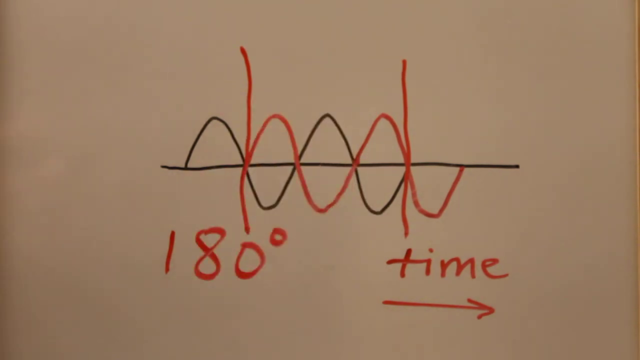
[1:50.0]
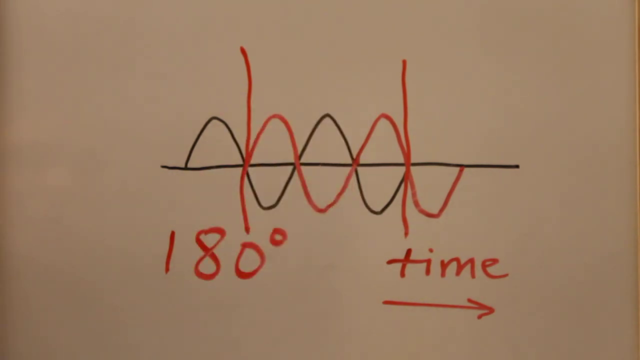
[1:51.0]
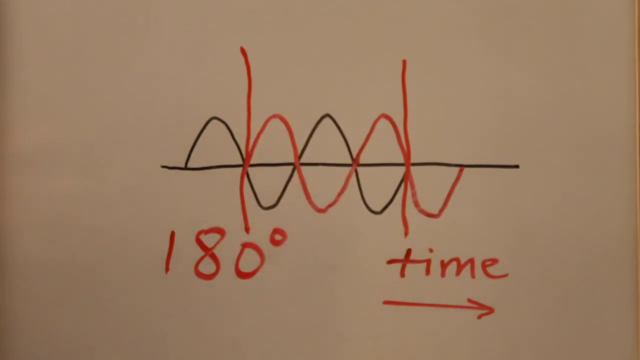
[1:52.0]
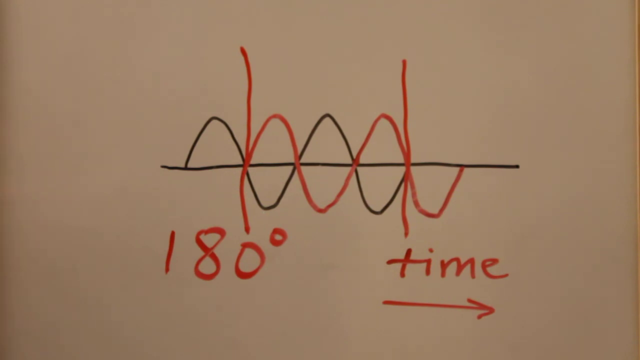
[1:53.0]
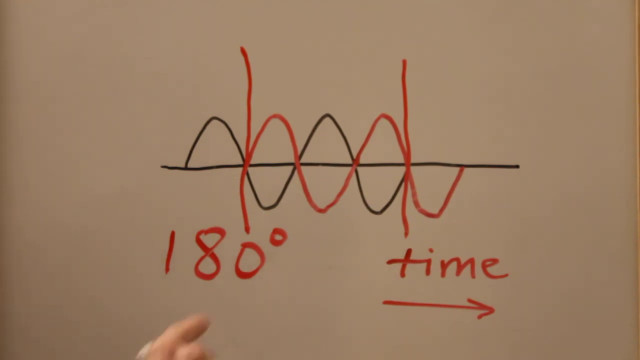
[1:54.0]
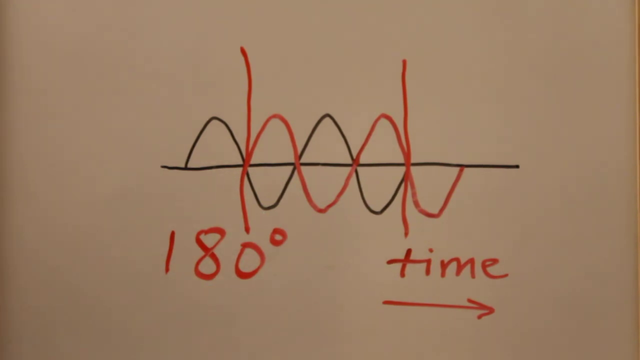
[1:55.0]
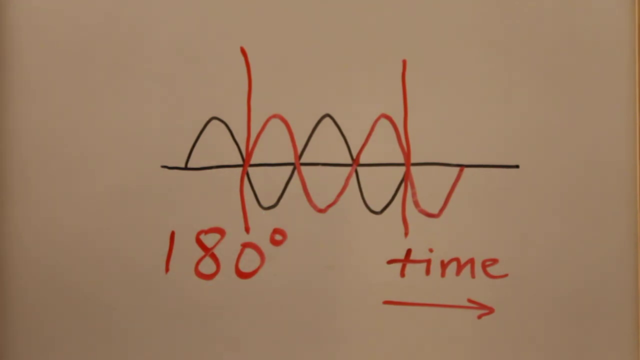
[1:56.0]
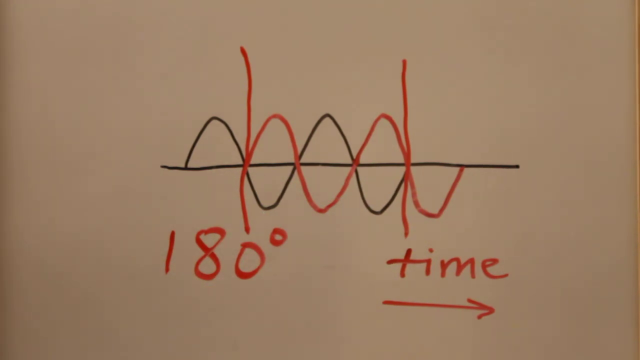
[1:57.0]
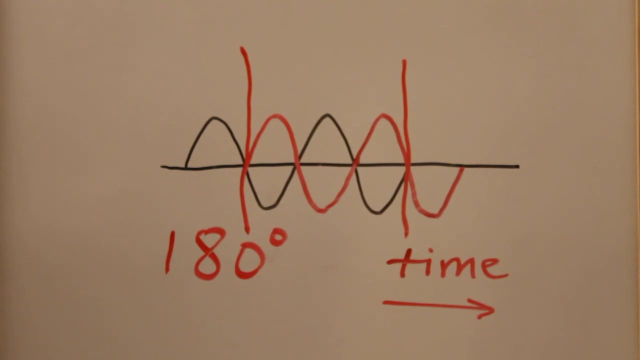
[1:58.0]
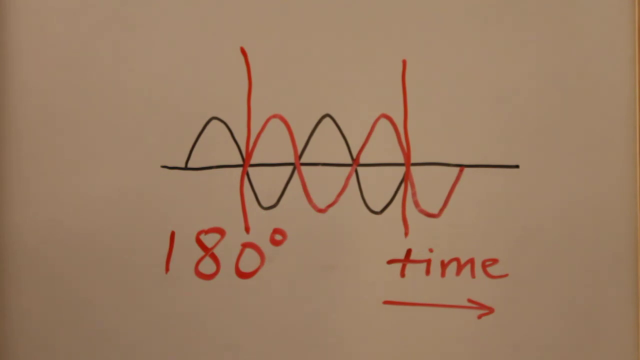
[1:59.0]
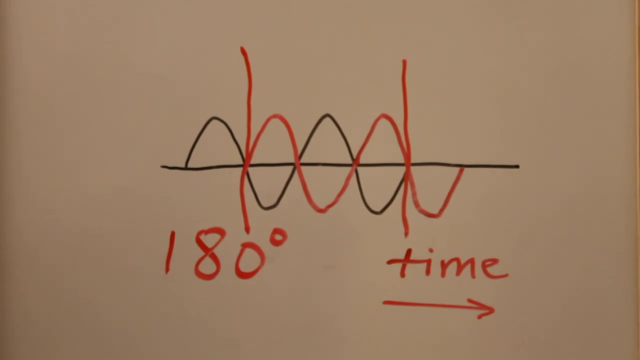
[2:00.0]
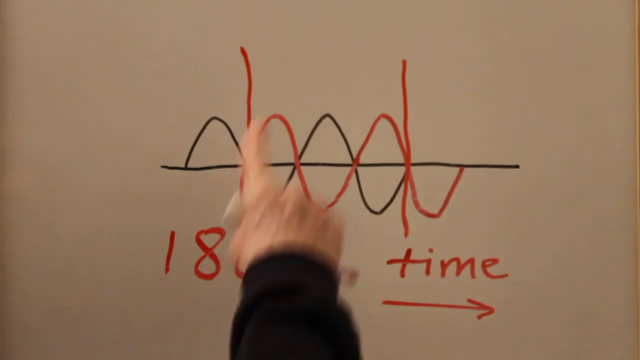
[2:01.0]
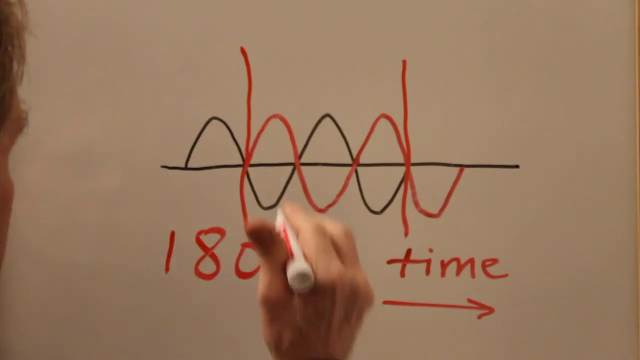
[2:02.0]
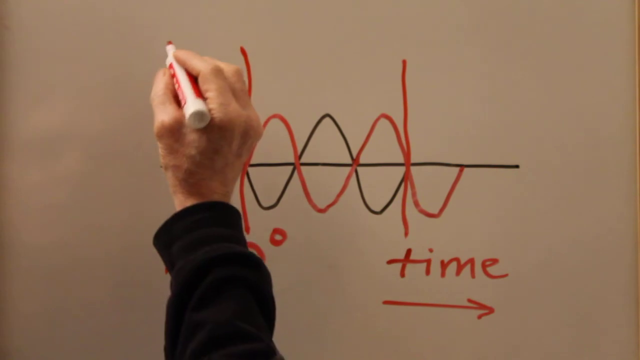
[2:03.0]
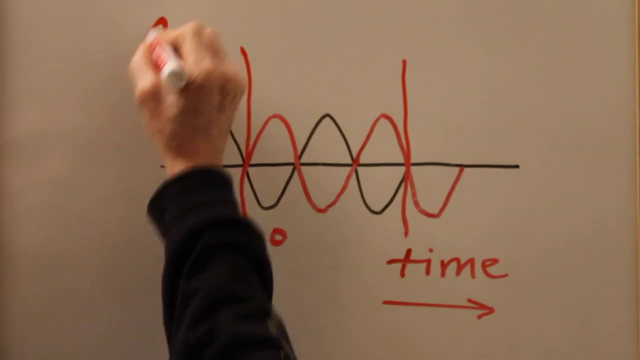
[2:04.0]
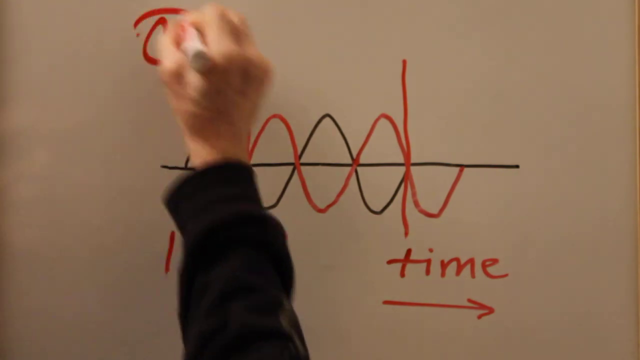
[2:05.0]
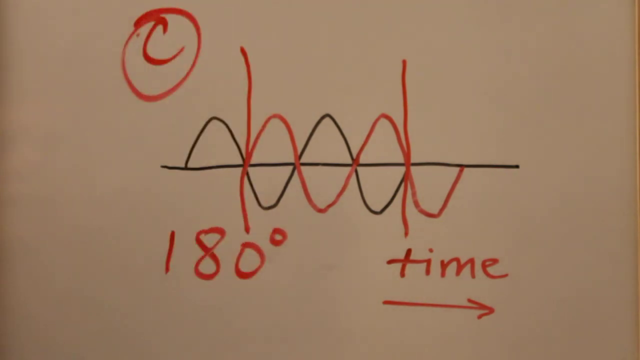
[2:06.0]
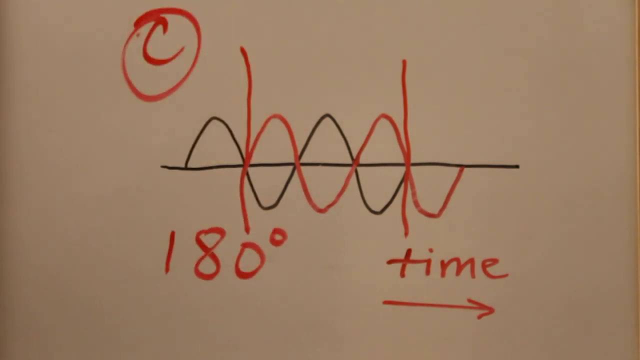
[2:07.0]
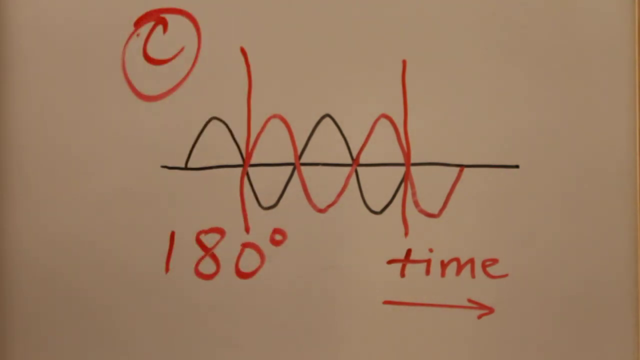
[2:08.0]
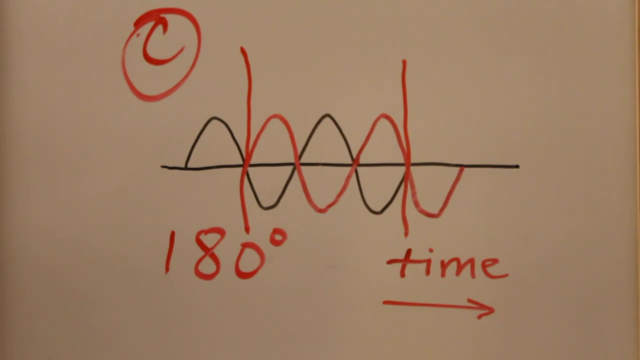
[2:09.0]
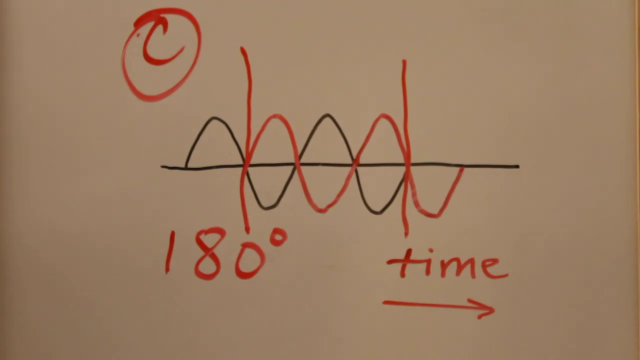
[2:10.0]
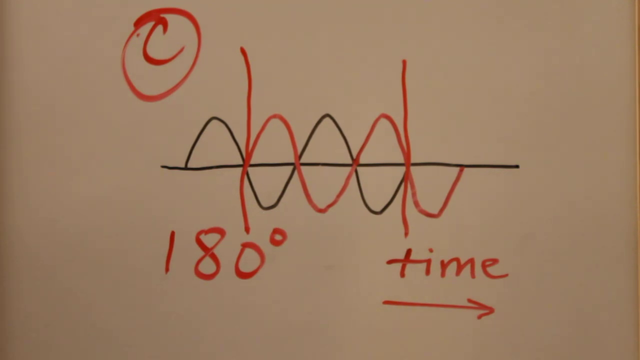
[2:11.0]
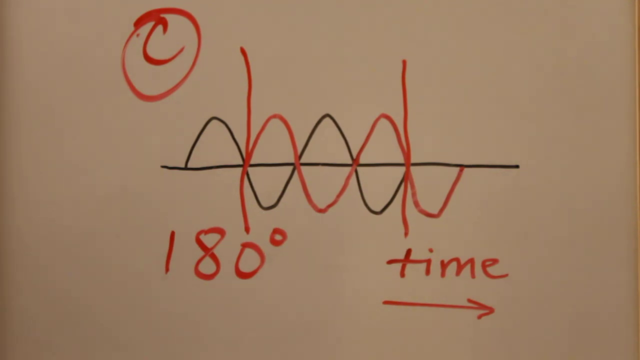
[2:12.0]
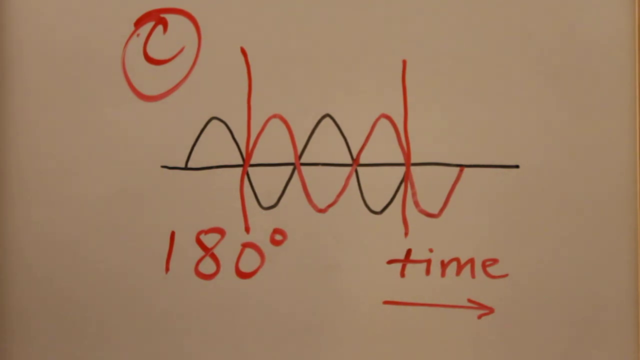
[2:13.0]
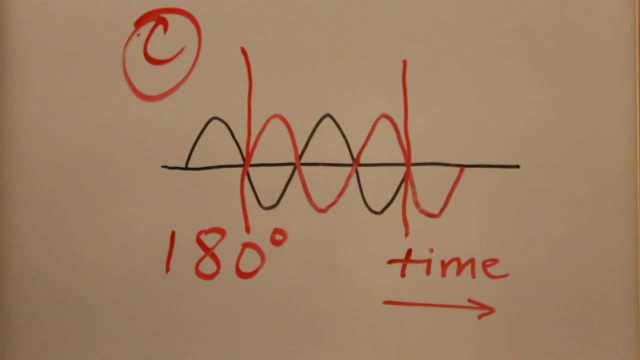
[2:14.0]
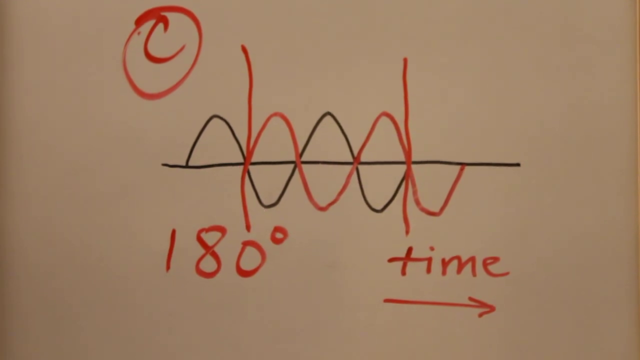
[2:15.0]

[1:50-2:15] His hand comes up quickly and waves toward the wavy lines, points briefly to the 180, then comes up again and gestures to the illustration. Just before drawing, the side of his head and his hair are briefly visible. He then draws at the upper left of the full image, in red: first a lowercase c, then a circle around it drawn clockwise, somewhat messily. The circled c is slightly outside the illustration, a little to the left, and almost at the very top of the screen. Apart from these brief glimpses of his head, only his hand is seen.